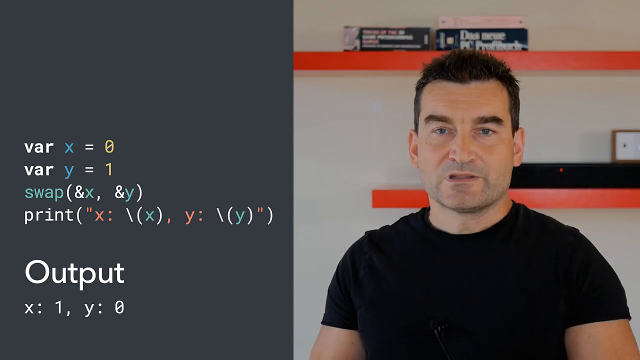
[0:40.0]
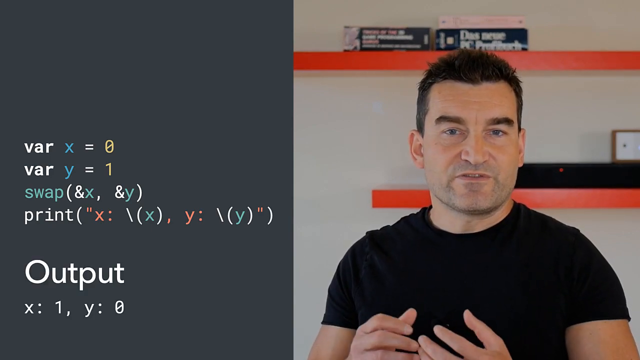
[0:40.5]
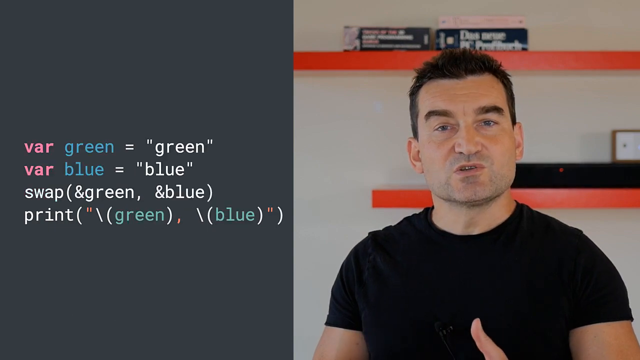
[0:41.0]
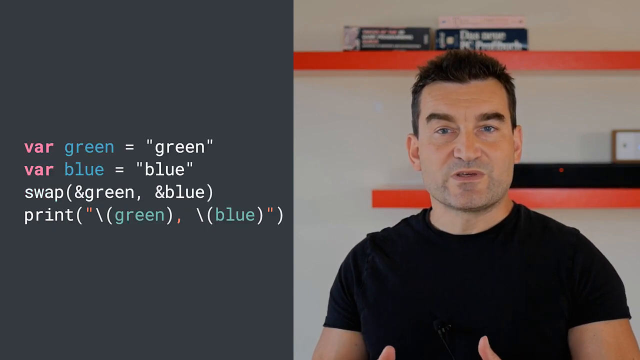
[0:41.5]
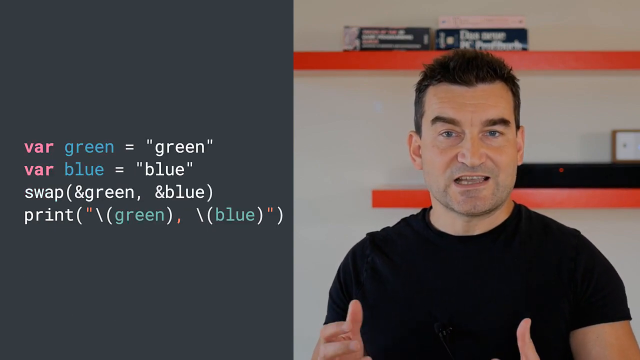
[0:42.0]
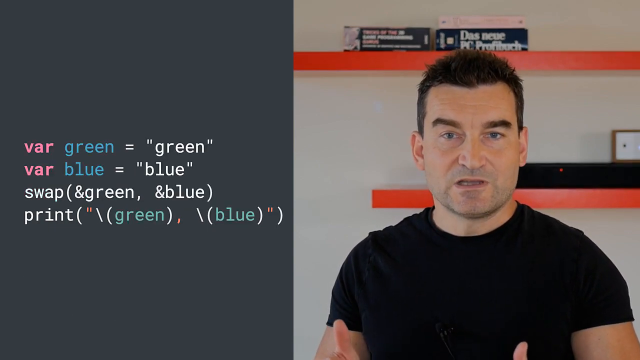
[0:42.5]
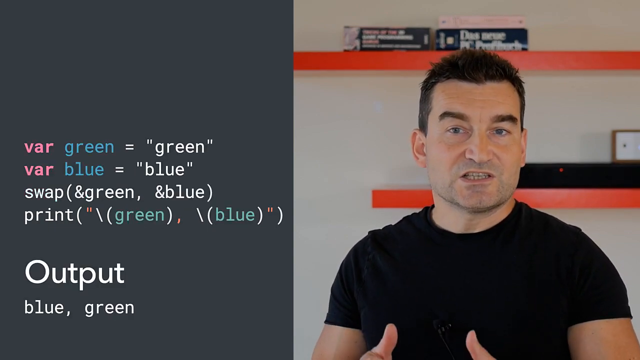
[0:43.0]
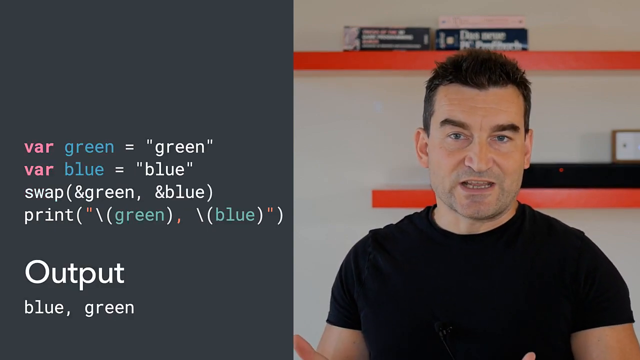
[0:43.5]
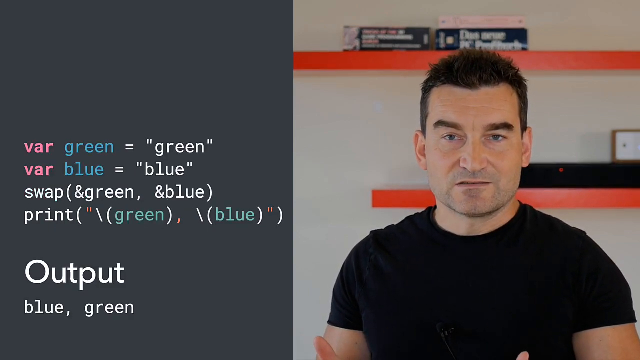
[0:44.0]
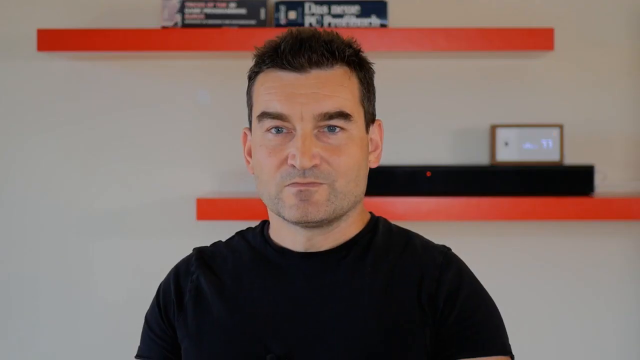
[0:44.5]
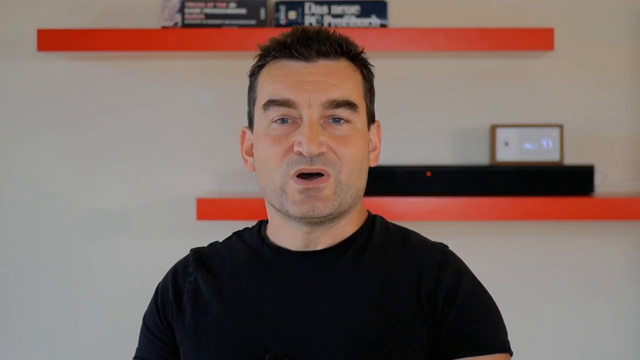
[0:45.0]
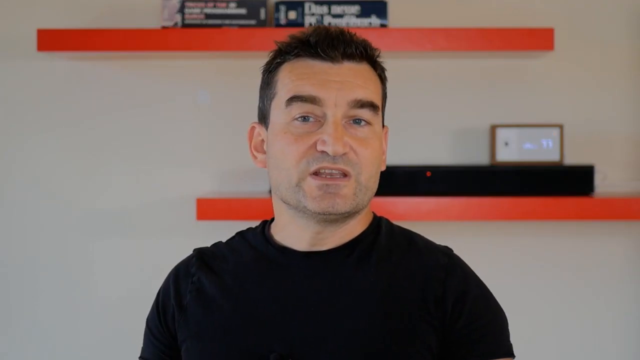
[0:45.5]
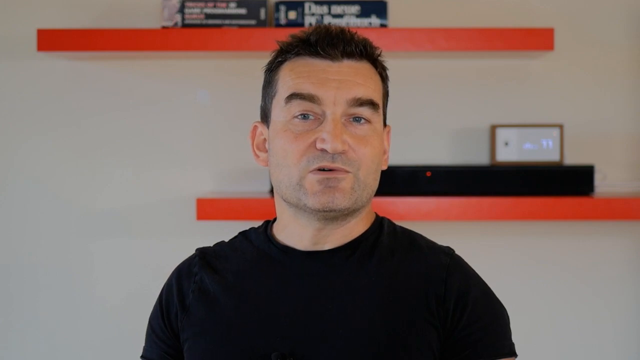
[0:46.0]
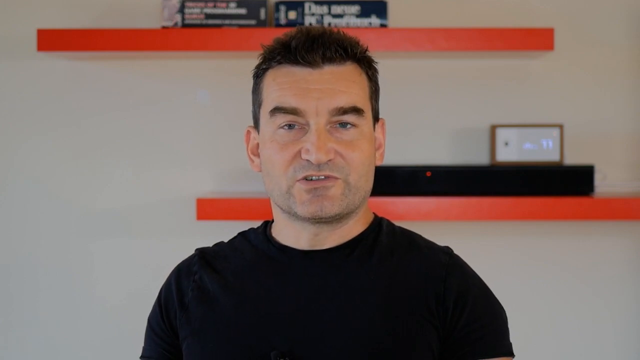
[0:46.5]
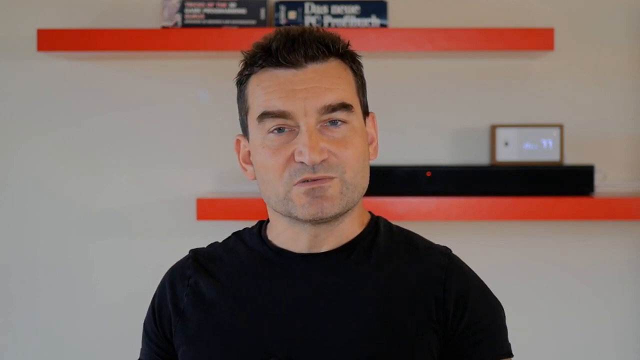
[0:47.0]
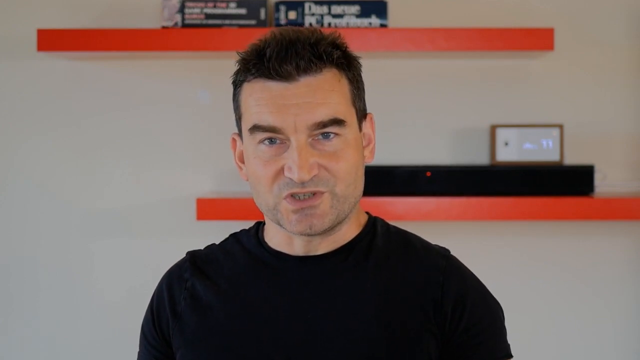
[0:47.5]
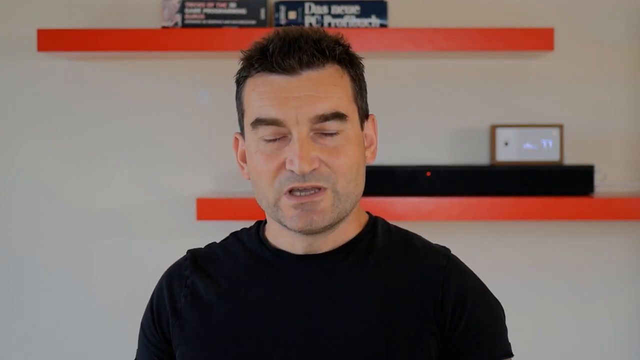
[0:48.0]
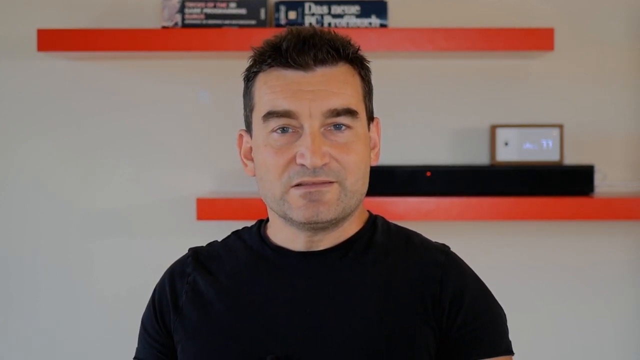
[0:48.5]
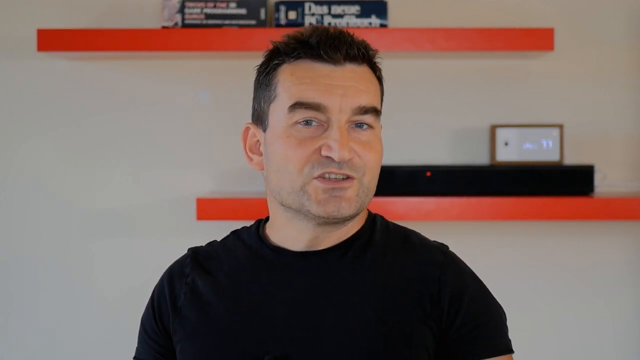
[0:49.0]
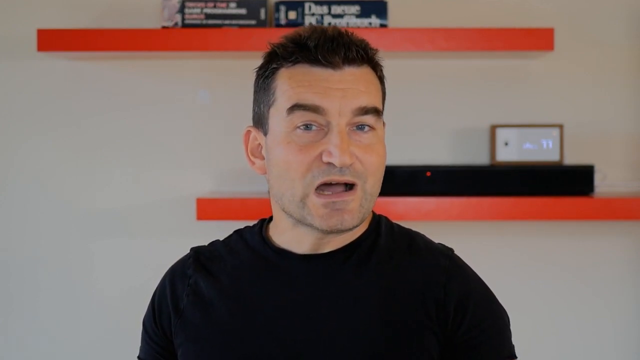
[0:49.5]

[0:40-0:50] On a split screen, equations in green, pink, white and blue appear on the left side, and "output" is written in white on a gray background. A man speaks on the right-hand side. The view then becomes full screen as he continues to speak, looking straight at the camera. He is a white man with black hair and bushy eyebrows, wearing a black sweater, and he speaks in front of two shelves. The lower one is orange and has a monitor and a smaller box that looks to be a calendar or a clock. The upper shelf is orange and has books stacked on it. He continues to speak, occasionally using his hands and occasionally tilting his head from left to right.